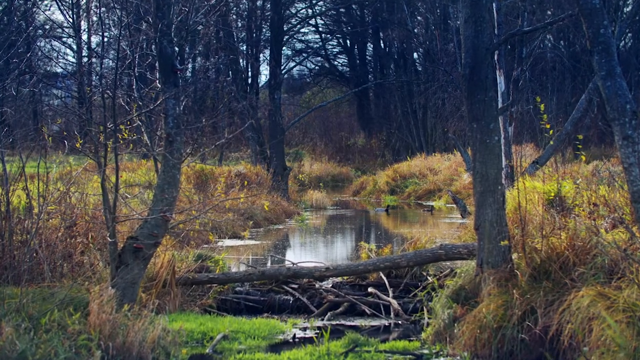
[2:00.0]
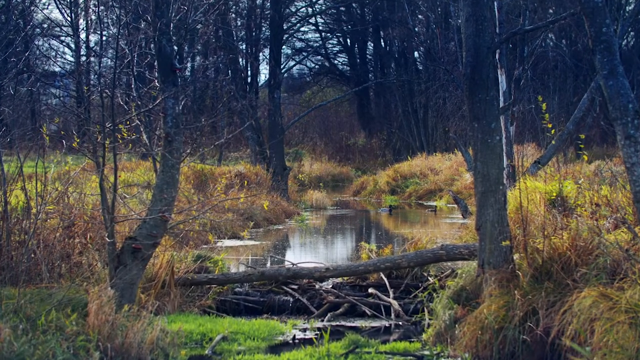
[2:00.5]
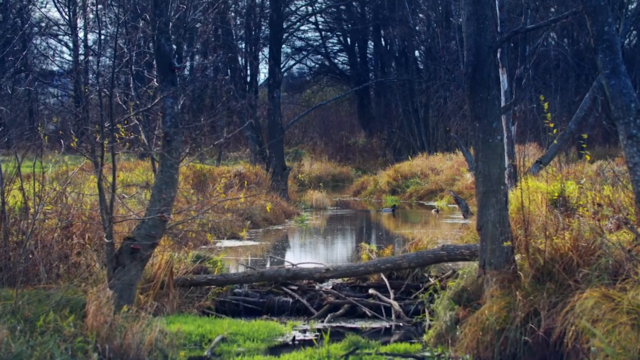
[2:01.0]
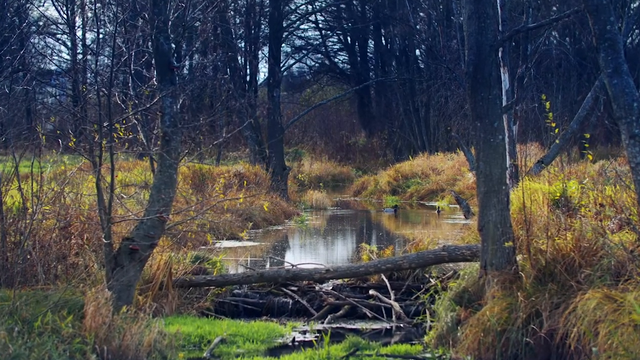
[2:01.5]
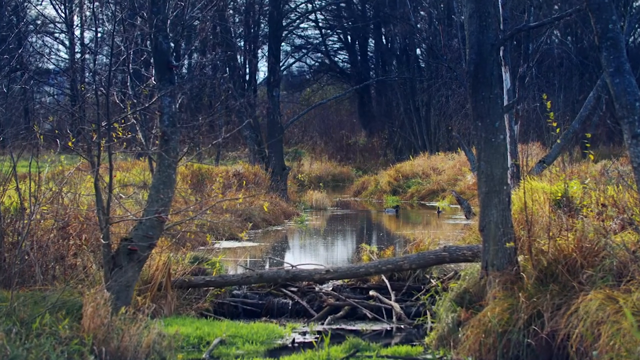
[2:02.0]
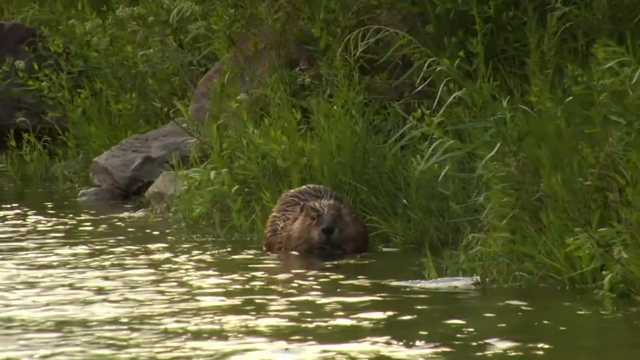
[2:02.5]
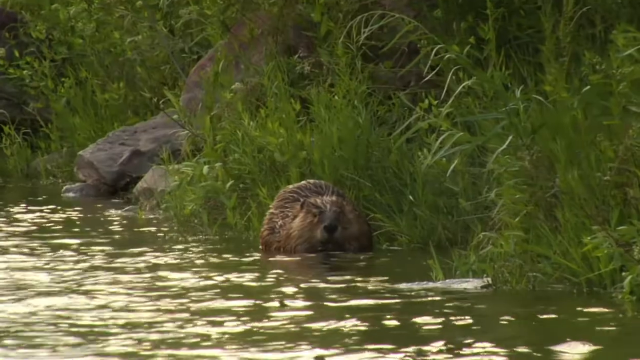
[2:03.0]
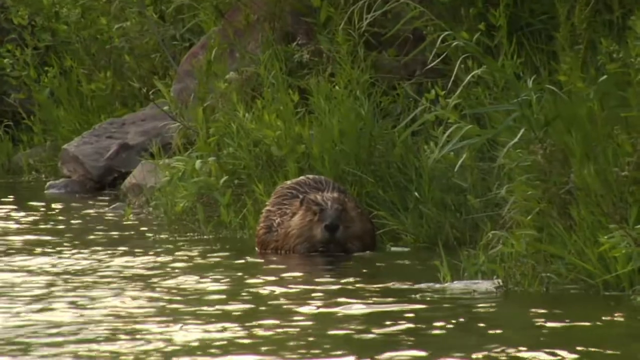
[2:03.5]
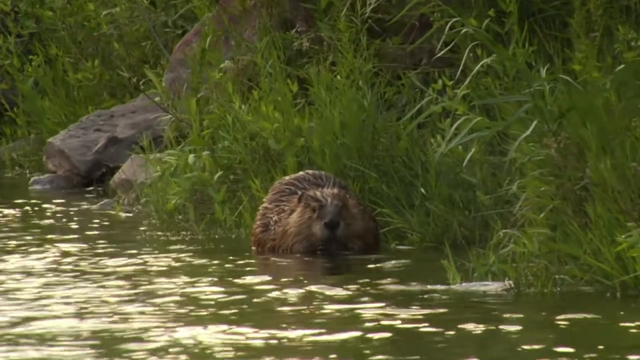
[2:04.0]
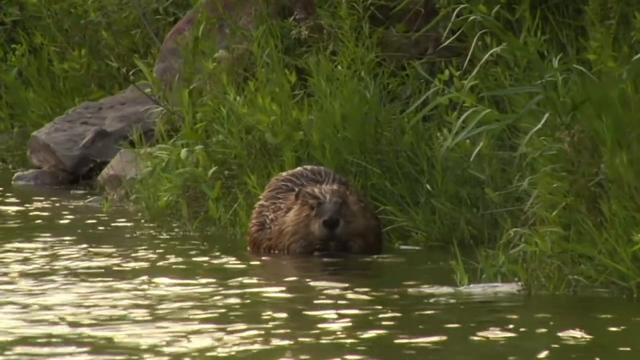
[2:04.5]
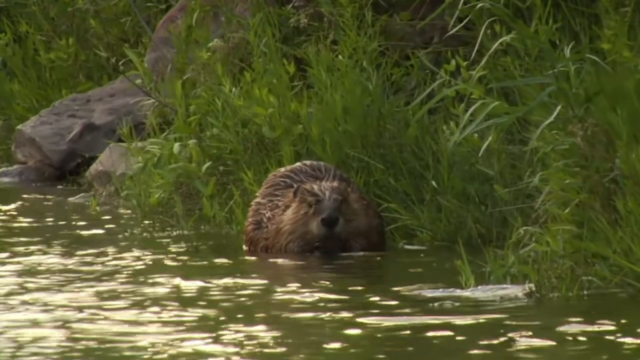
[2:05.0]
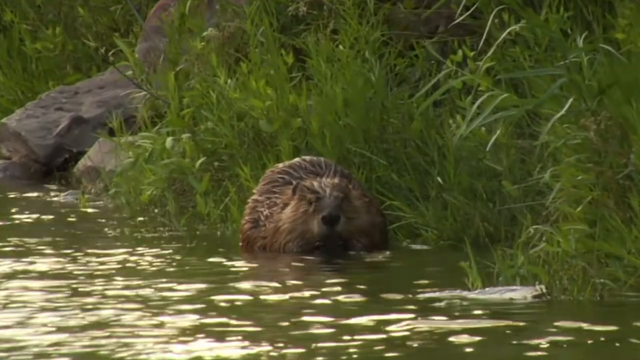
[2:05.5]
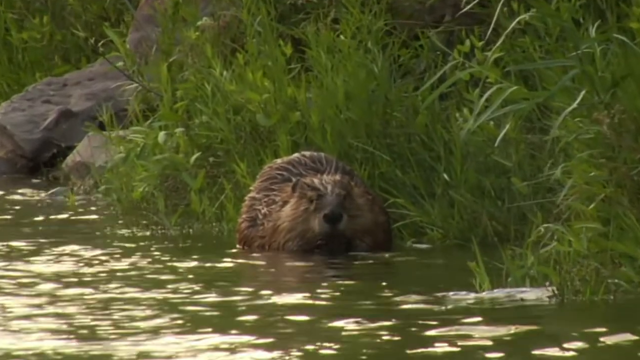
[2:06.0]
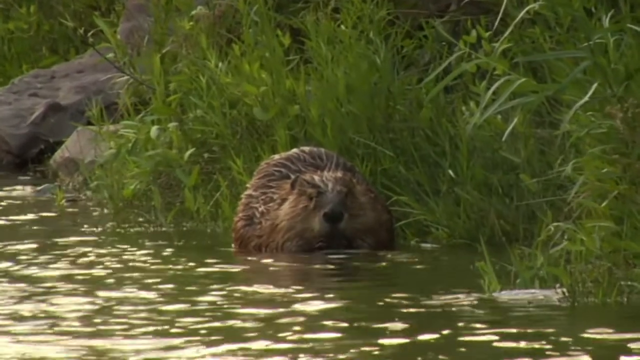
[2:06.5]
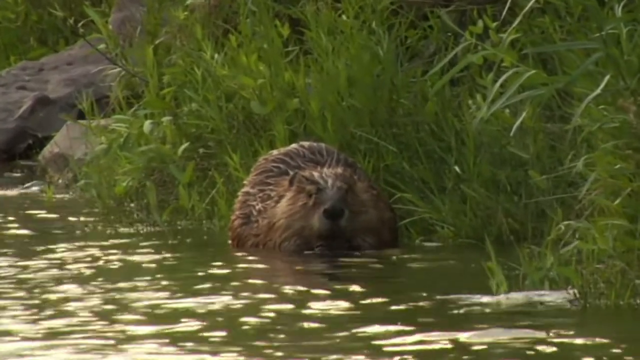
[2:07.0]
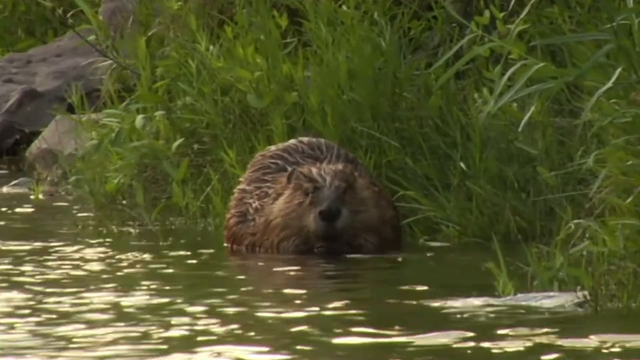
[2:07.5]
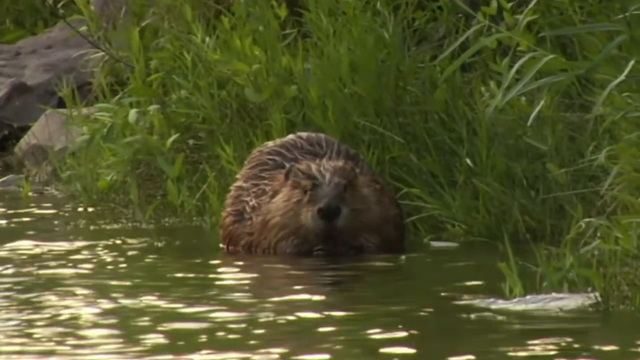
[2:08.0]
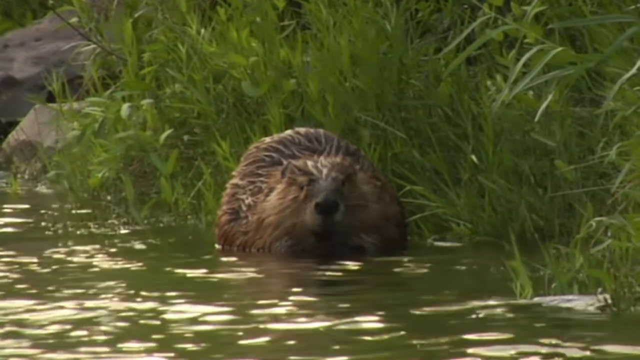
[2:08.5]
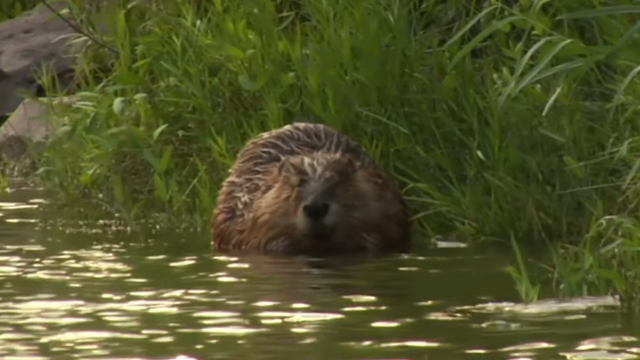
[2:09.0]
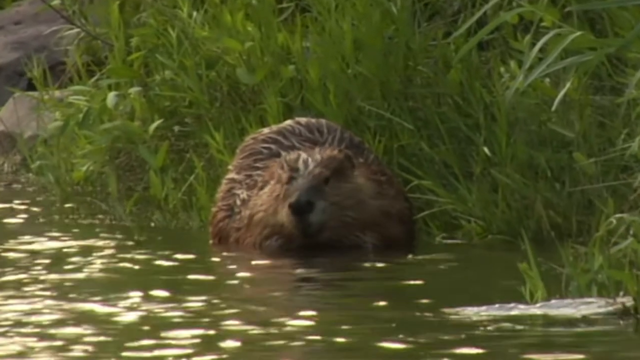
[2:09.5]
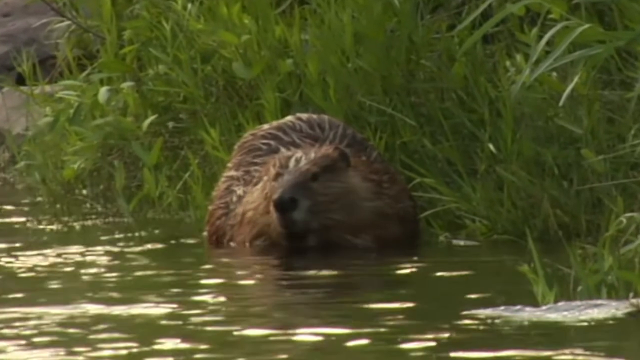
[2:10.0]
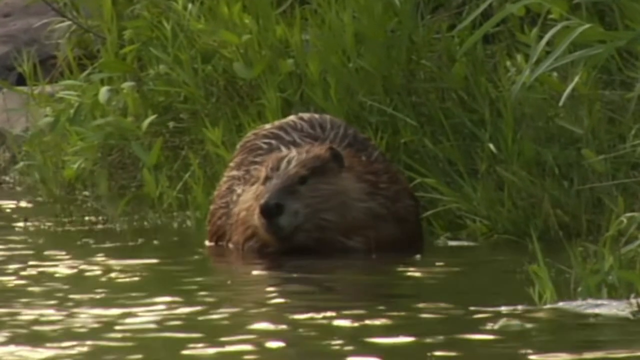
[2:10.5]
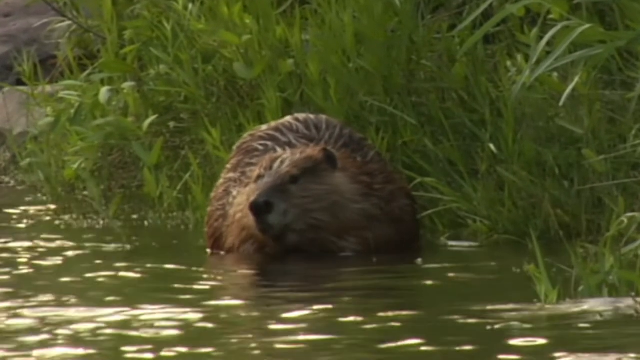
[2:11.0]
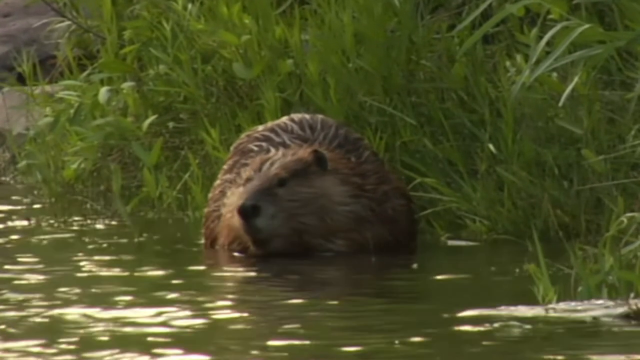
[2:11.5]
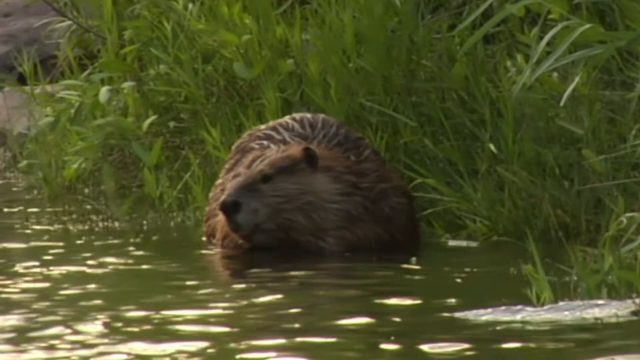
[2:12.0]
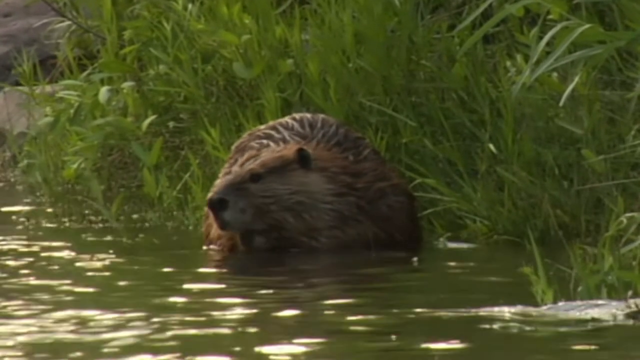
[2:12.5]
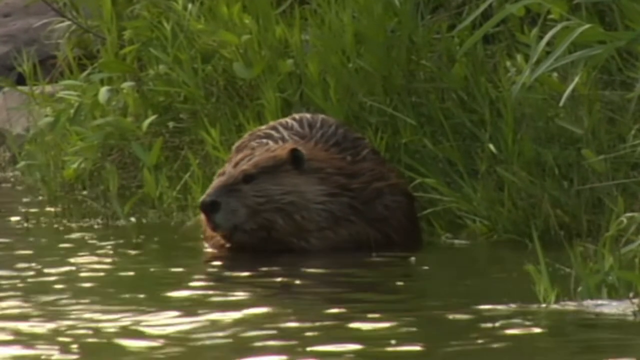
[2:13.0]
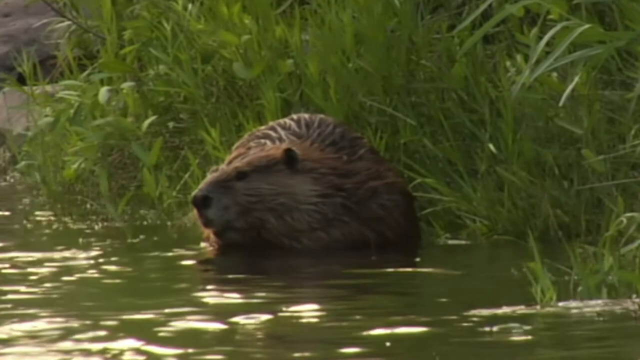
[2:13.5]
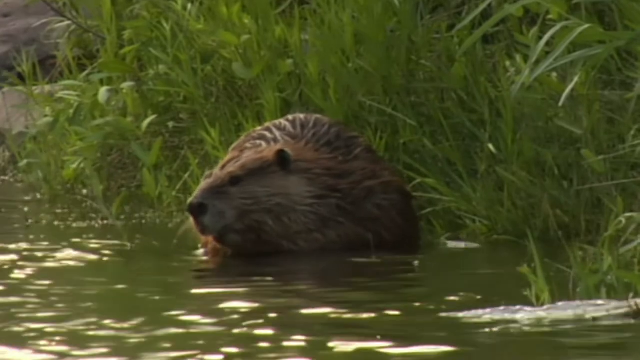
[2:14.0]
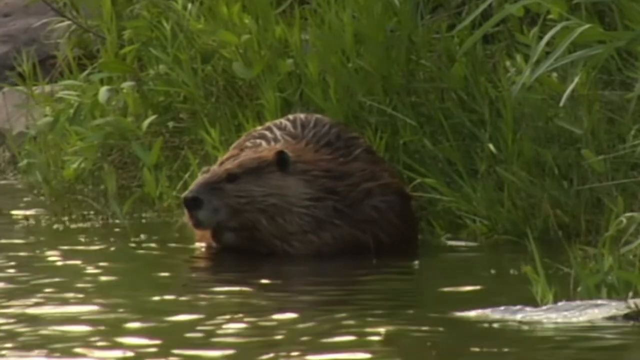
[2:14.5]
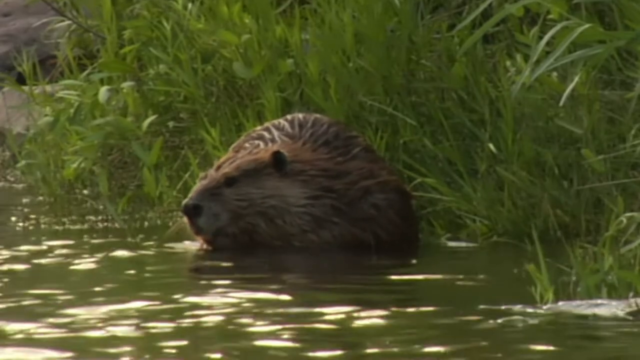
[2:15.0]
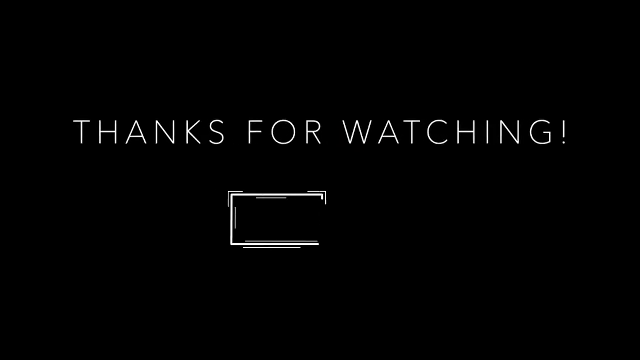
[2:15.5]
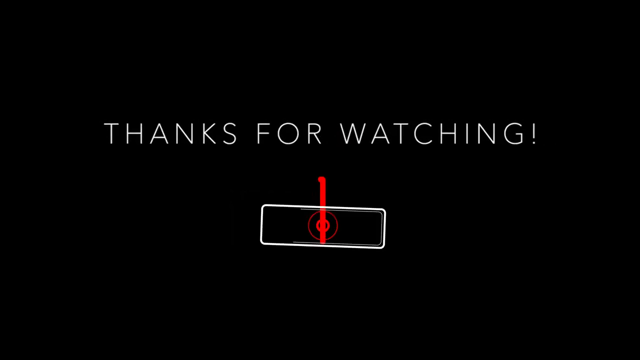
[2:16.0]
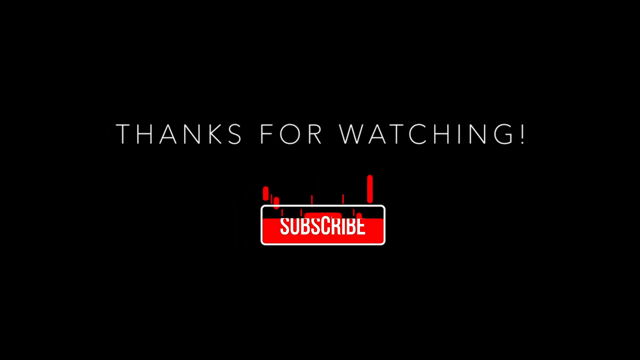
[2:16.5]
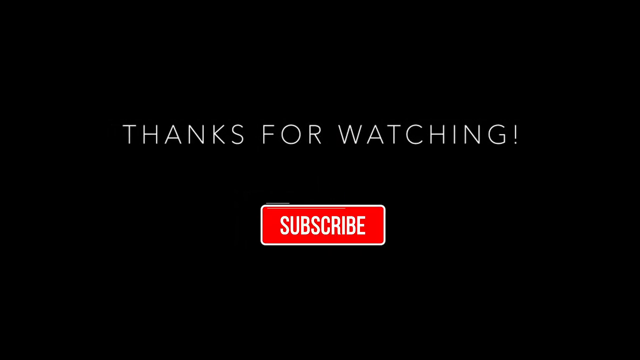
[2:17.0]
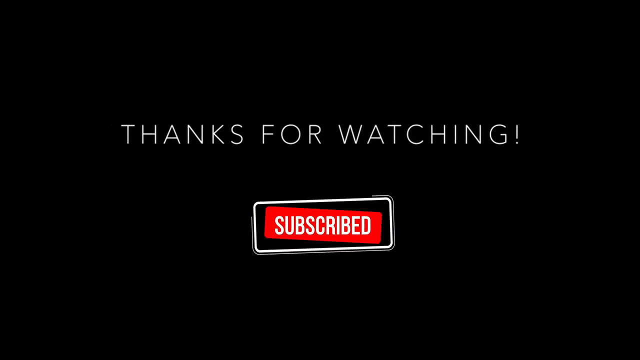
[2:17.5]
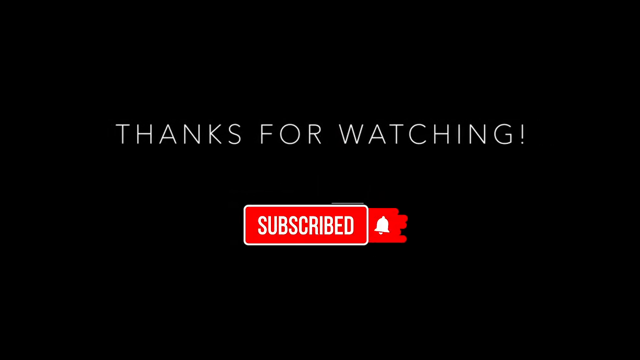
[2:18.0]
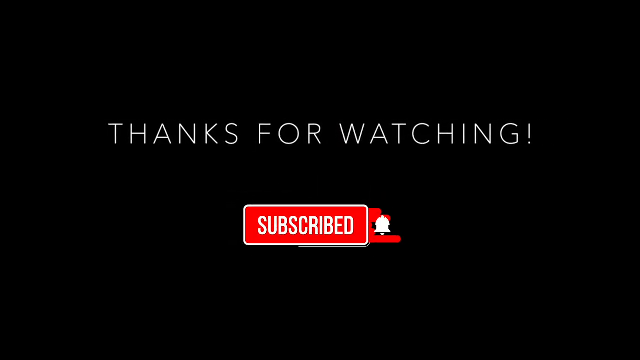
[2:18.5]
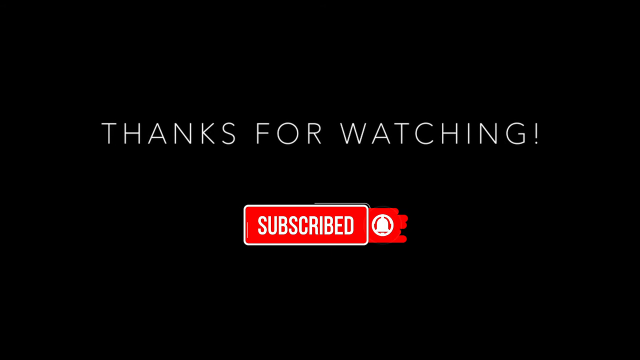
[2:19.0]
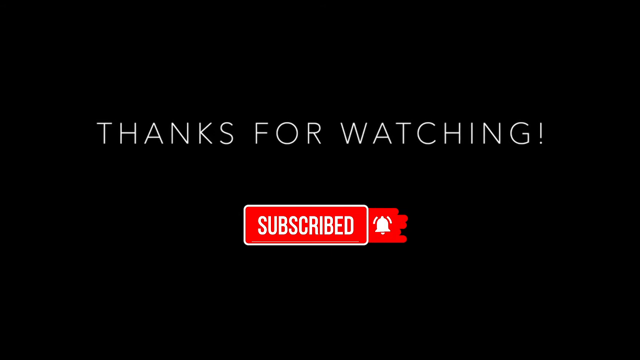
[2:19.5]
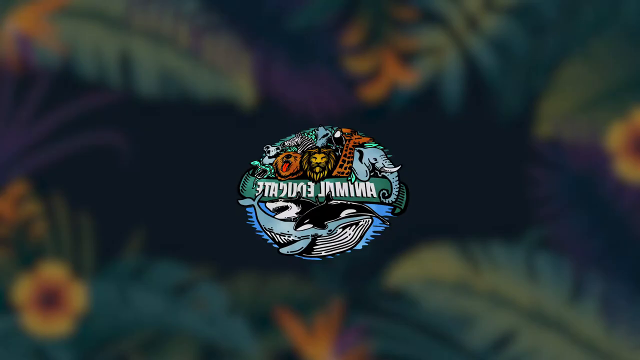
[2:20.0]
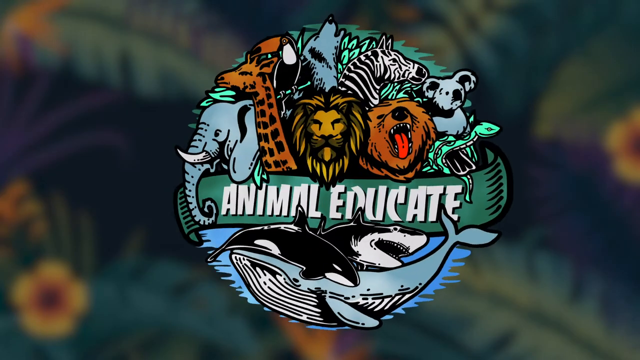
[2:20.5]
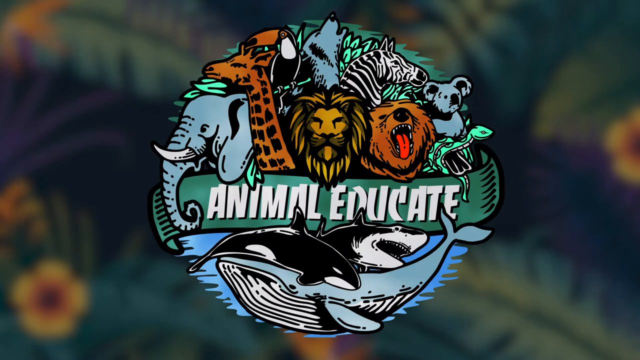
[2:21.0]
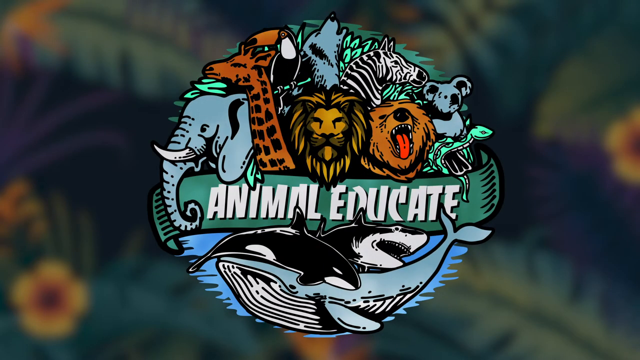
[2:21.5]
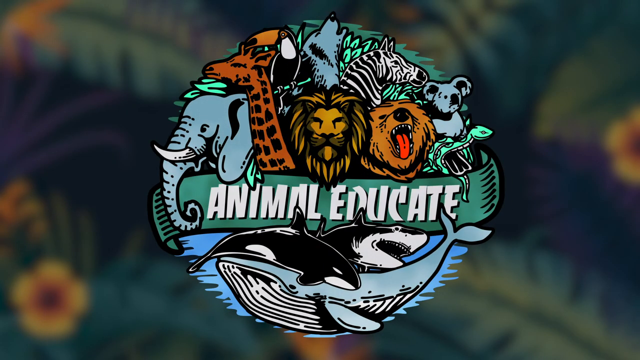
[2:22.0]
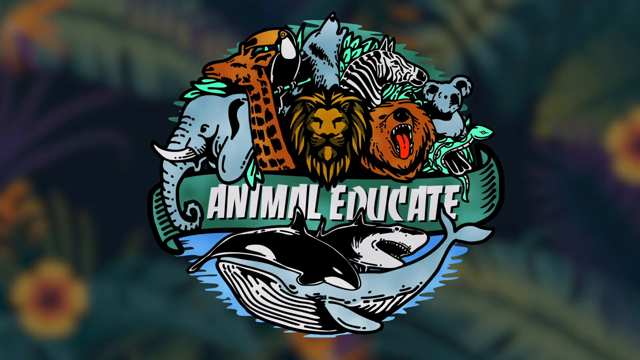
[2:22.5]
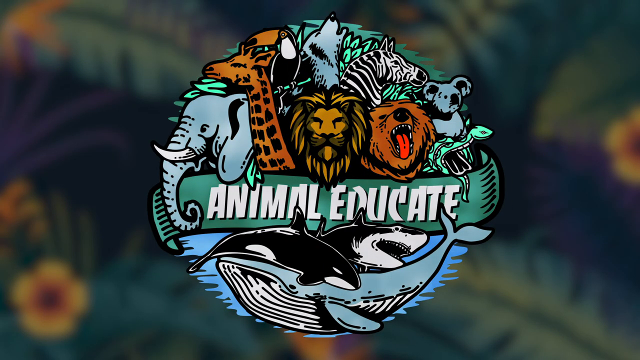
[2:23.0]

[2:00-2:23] A wooded area has trees bare of leaves and tall grass, mostly brown with some green. In the forefront is a dam, probably a beaver dam, with a large log going across, filled in with medium-sized sticks. The dam has dammed up a narrow creek, creating a widened pond-like area where two ducks swim. The video then transitions to a large beaver sitting in flowing water right against the grassy banks. The video zooms in on the beaver's face as it chews something in its mouth, and the beaver turns its head and body to its right, now looking sideways. Next, a black background shows white lettering that says "thanks for watching". Below that is a red rectangle with white lettering that says "subscribe" and a white bell to the right of the word. Finally, a colorful jungle-like background is blurred in the back, and in the foreground is a circle with "animal educate" in the middle, along with images of a shark, a whale, a giraffe, an elephant, a toucan, a wolf, a lion, a bear, a zebra, a koala, and a snake.